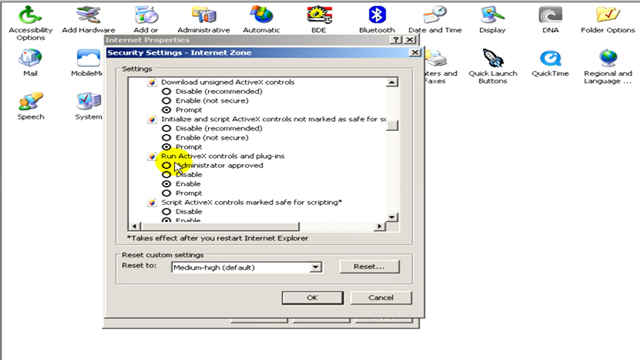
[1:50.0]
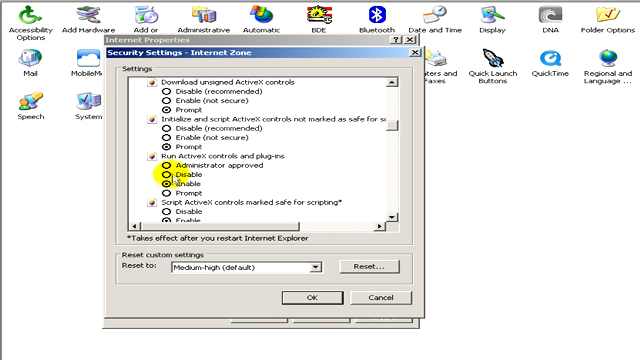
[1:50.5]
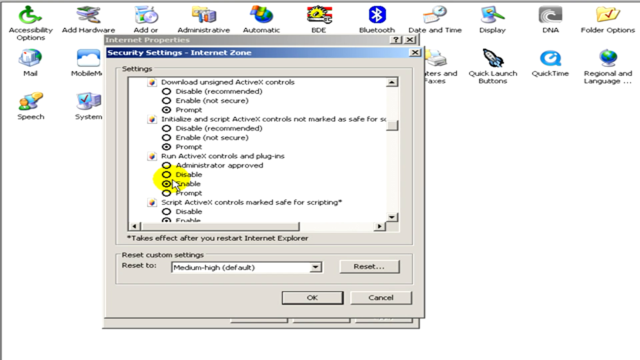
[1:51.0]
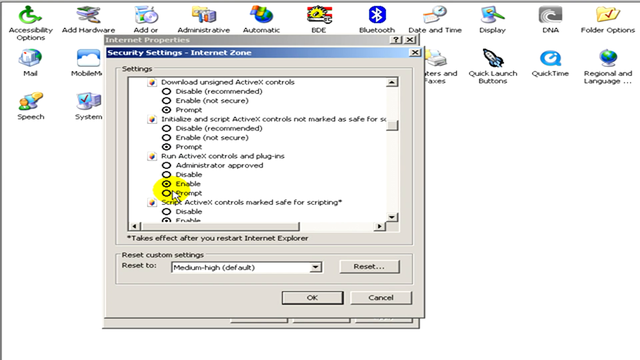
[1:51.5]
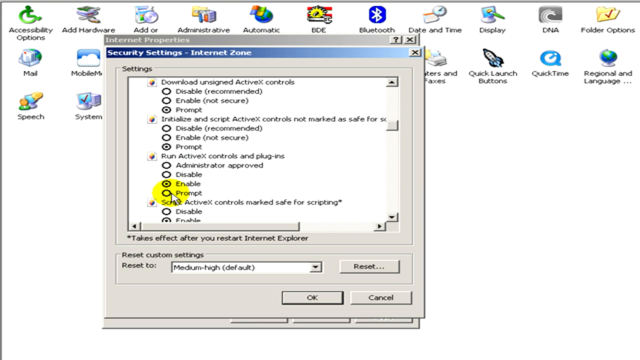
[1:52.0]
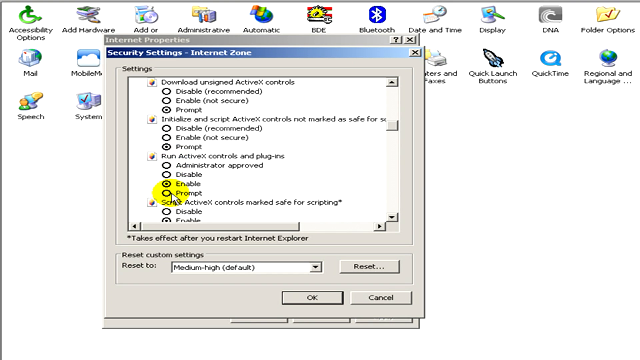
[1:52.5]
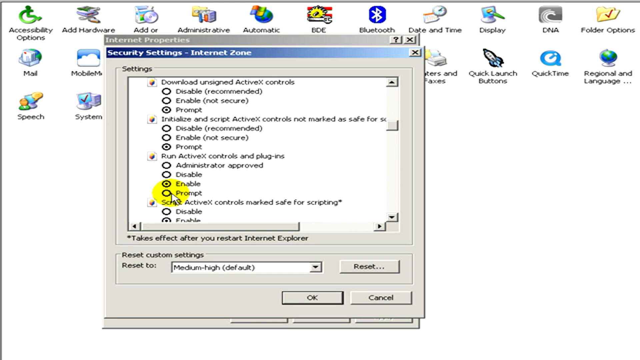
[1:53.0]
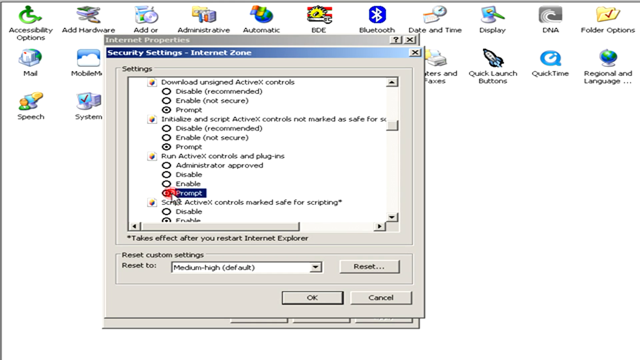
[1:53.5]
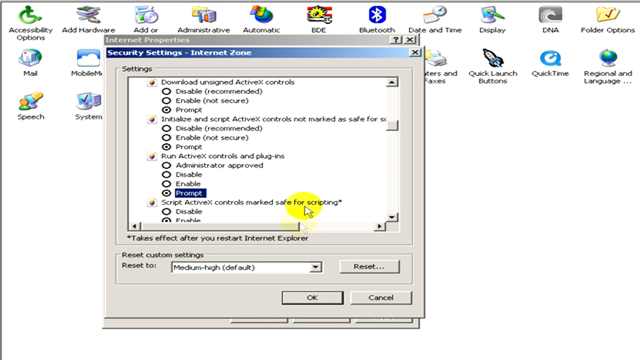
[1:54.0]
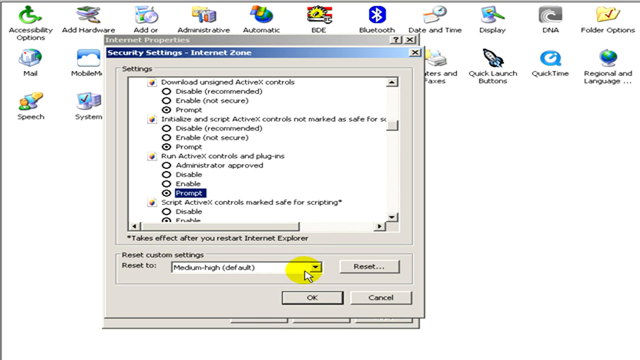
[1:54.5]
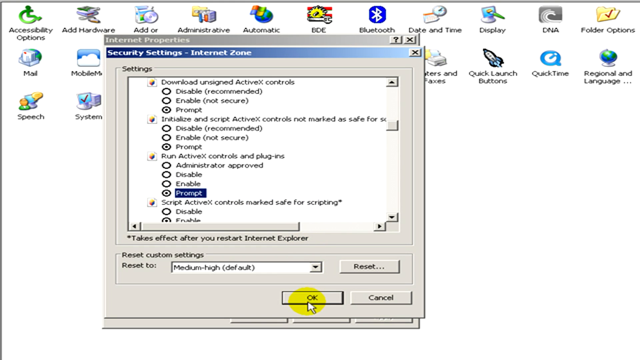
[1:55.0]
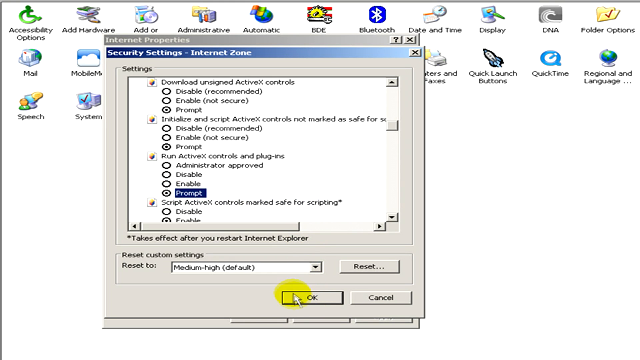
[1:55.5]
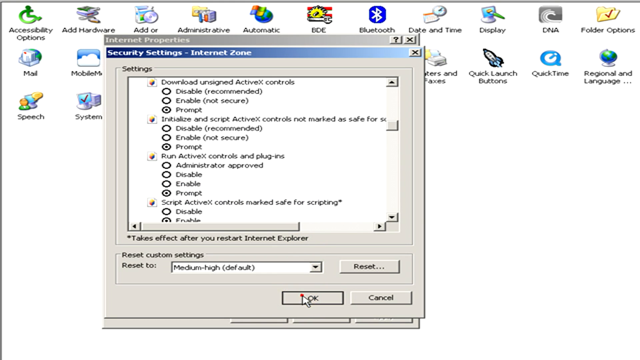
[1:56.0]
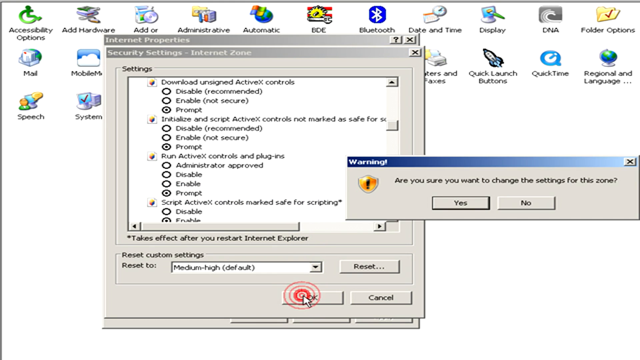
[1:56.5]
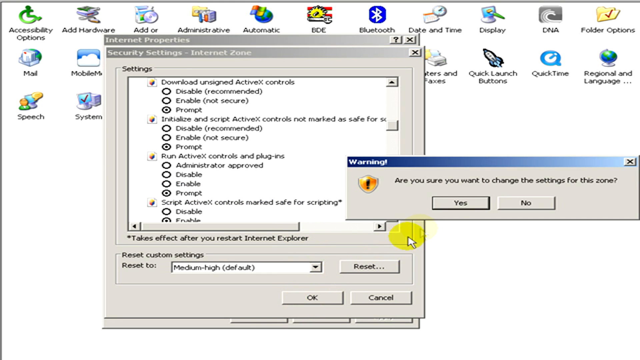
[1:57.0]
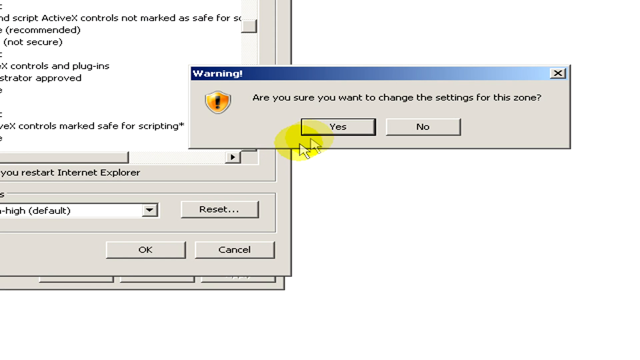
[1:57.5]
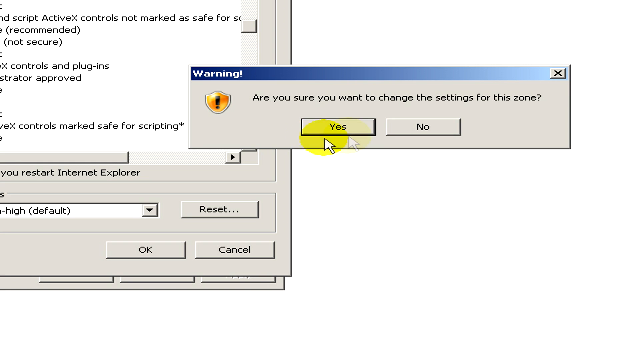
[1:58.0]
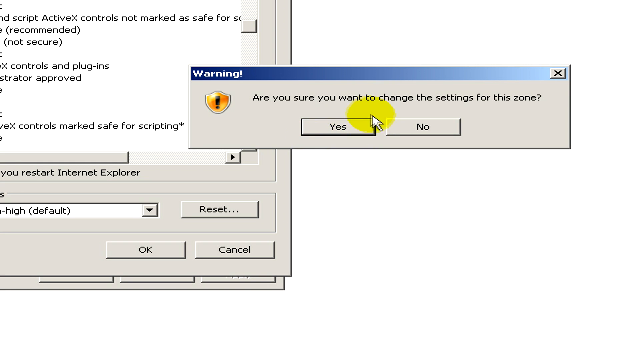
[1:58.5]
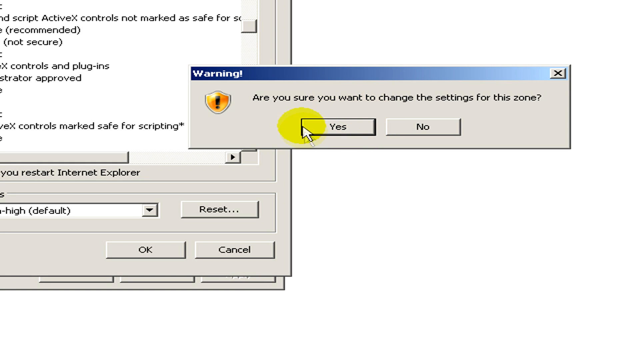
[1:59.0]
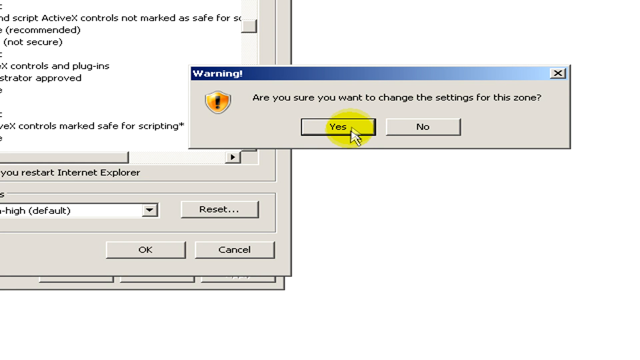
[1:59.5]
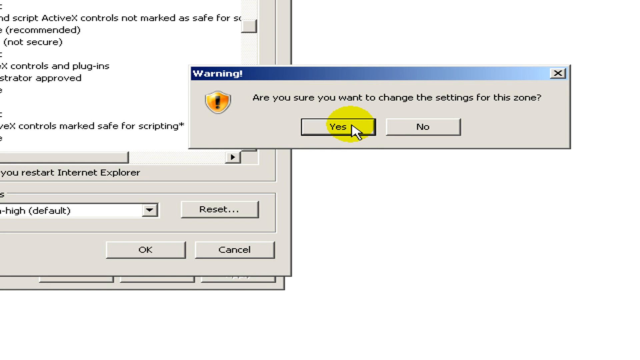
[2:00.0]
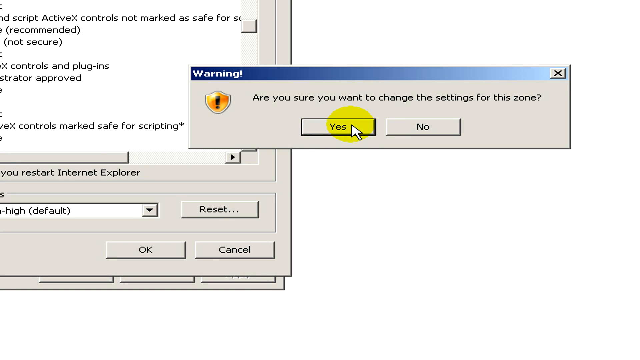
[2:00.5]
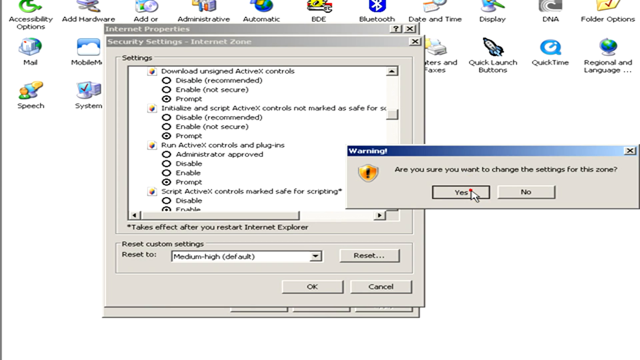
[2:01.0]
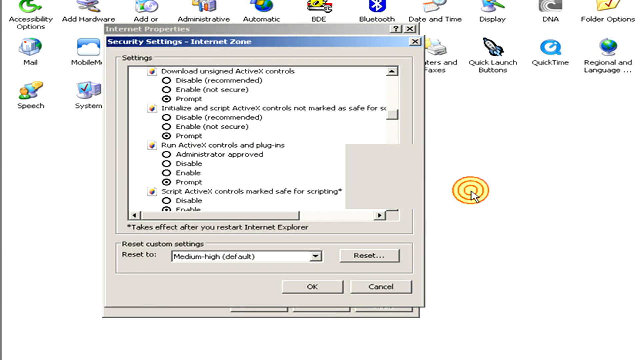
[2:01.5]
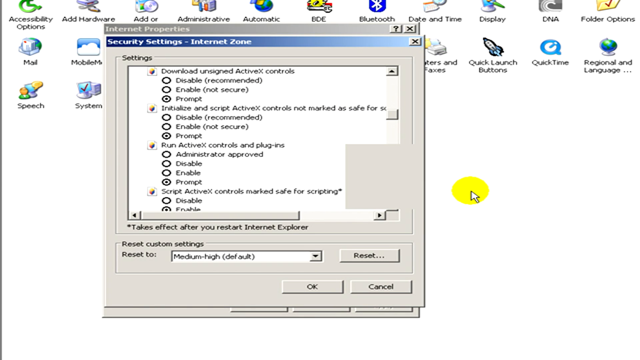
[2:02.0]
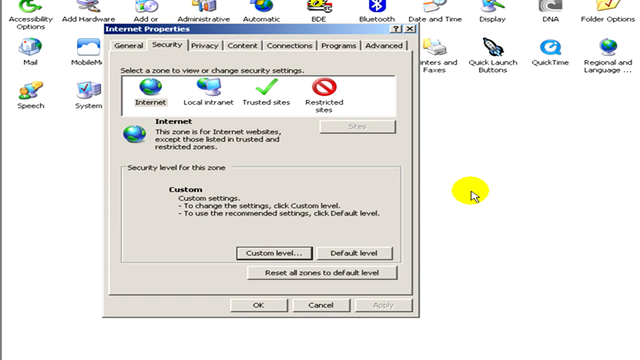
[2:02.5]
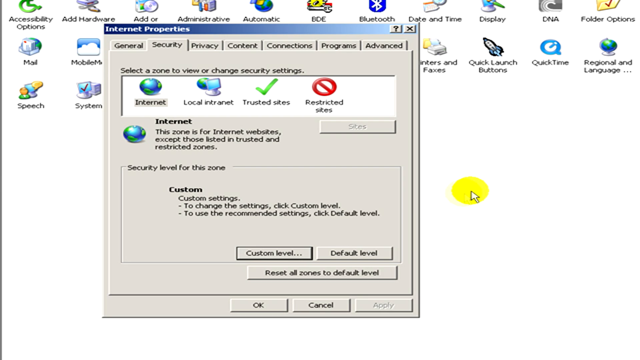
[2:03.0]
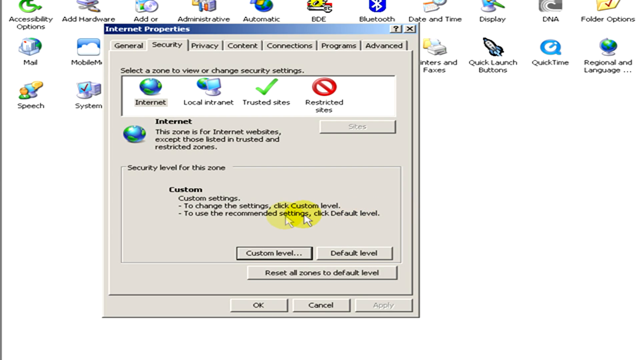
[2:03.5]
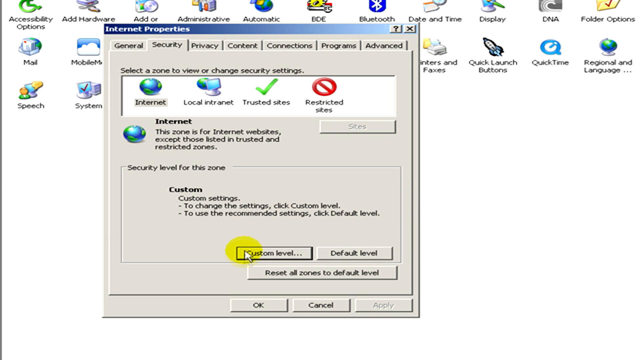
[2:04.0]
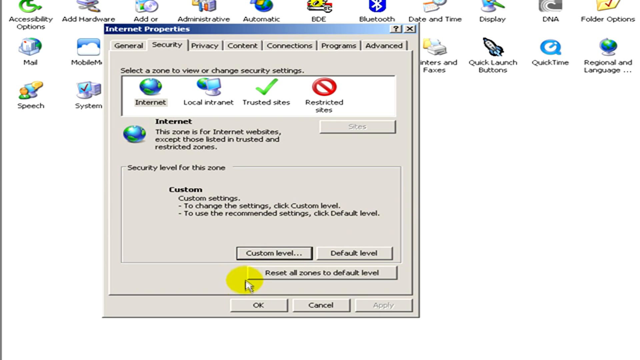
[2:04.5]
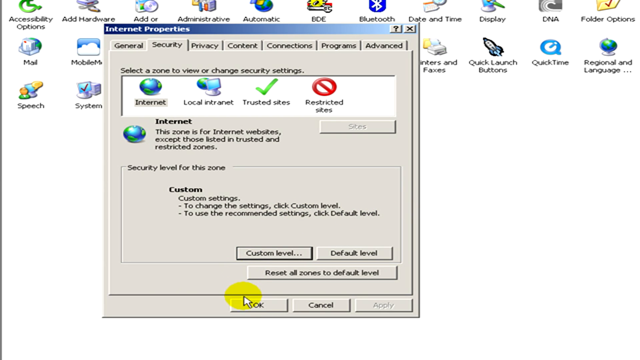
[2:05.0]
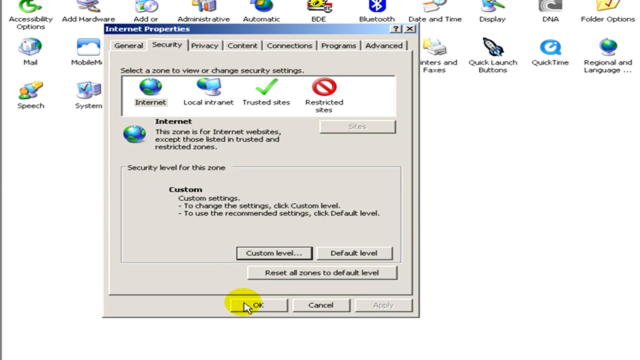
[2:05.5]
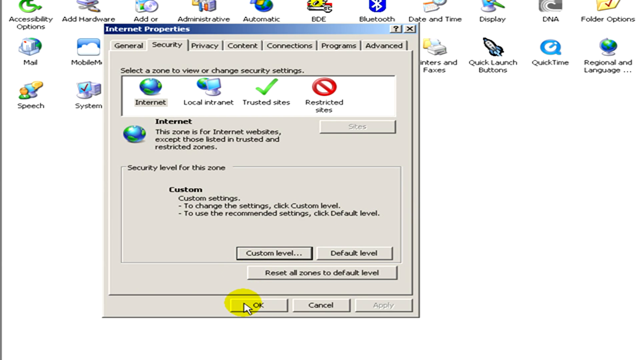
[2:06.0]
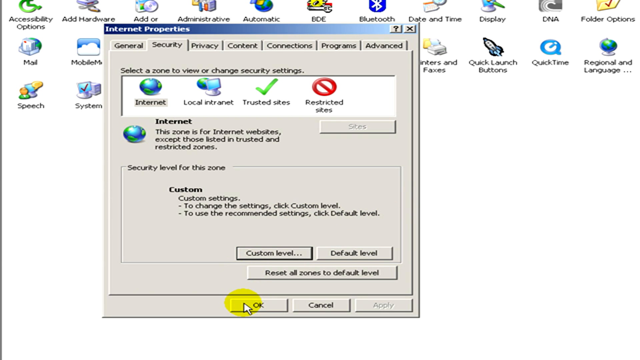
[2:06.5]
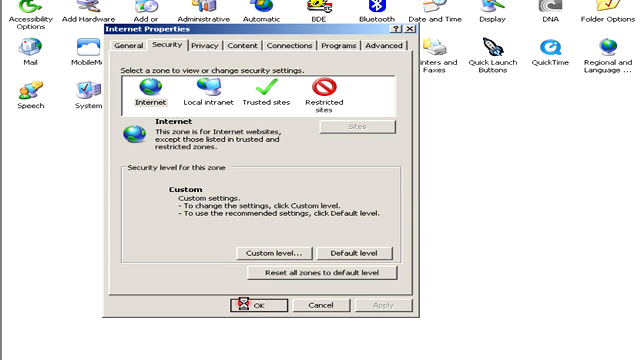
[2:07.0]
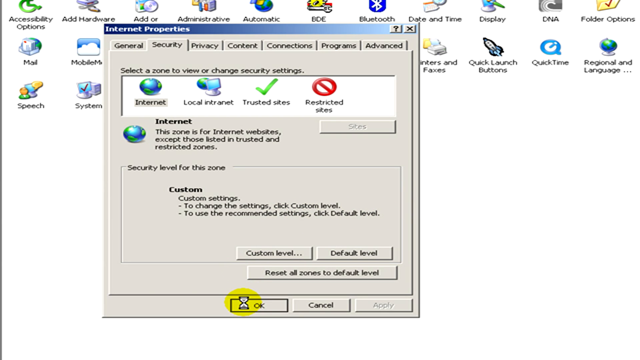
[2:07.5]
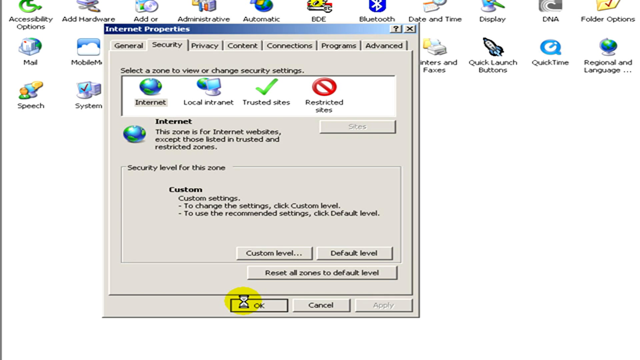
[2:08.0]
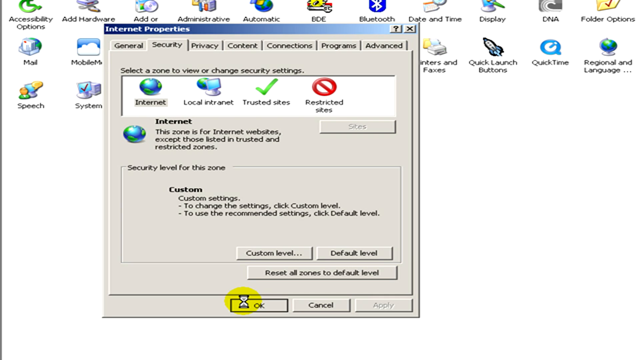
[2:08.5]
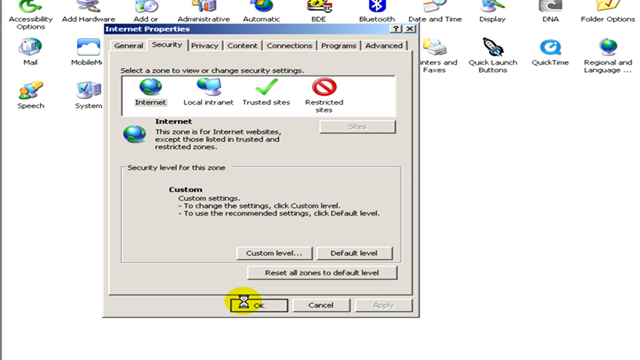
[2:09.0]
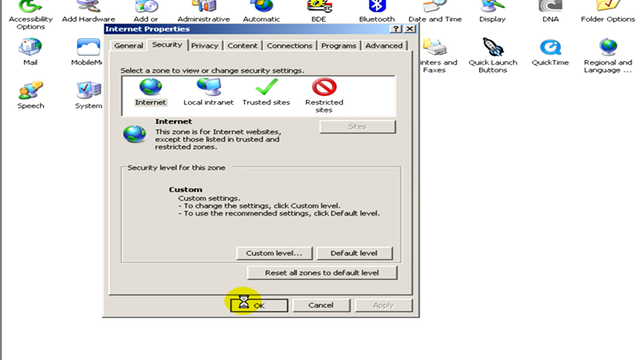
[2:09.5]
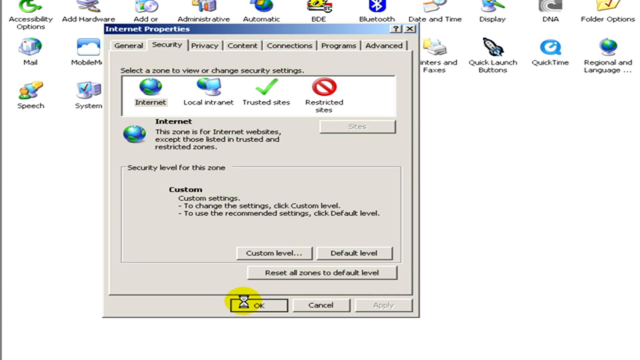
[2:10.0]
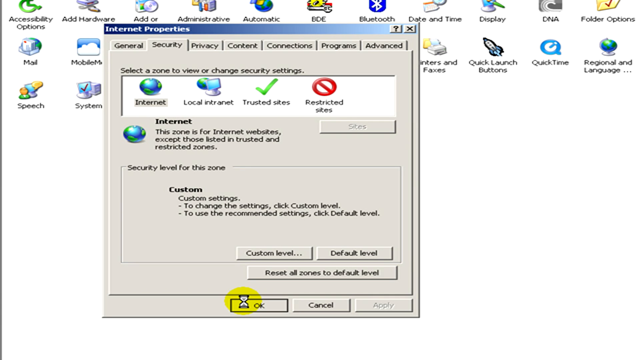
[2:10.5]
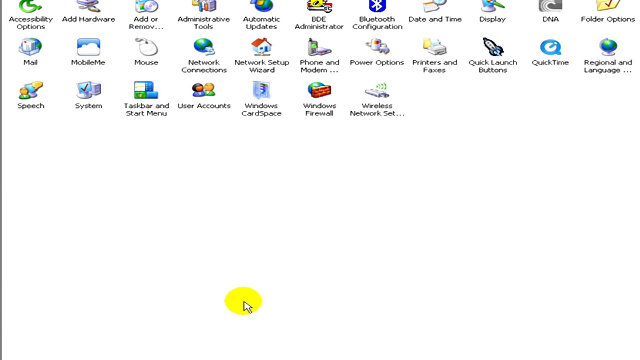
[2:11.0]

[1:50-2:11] The person continues through the many listed options in the Internet Zone security settings, whose choices vary among Disable, Enable, Prompt and Administrator Approved, slowly going through them and changing some. They change run ActiveX controls and plugins from a different option to Prompt, go to the bottom of the window and press OK. A warning window pops up reading "Are you sure you want to change the settings for the zone?", and the cursor circles around Yes and clicks it. Back on the Internet Properties window, they press OK; a loading symbol appears, the window disappears, and the control panel with its other options is shown.